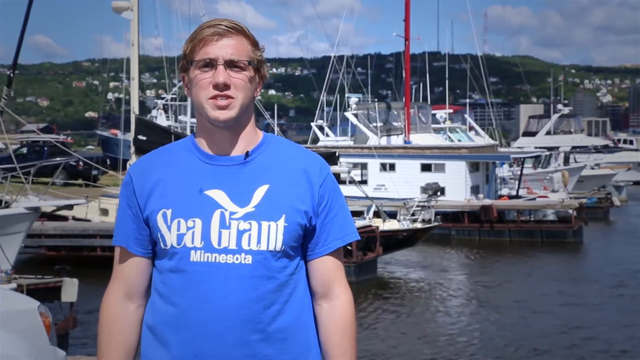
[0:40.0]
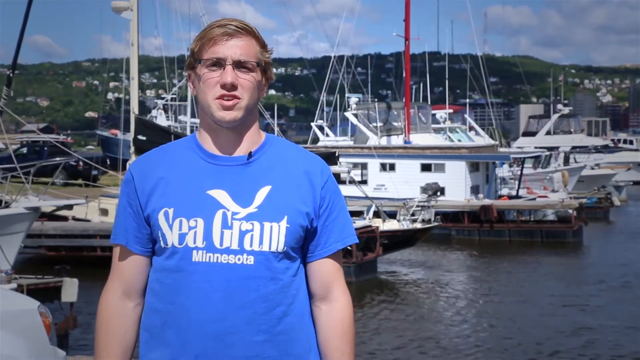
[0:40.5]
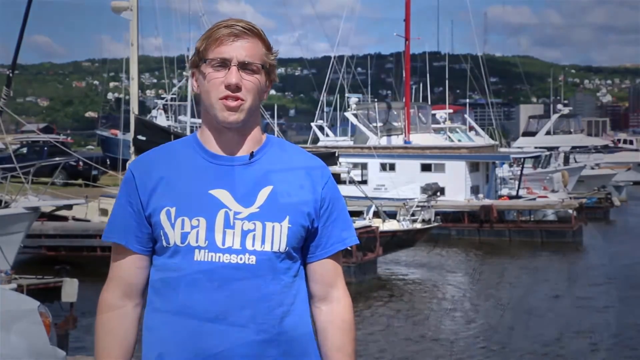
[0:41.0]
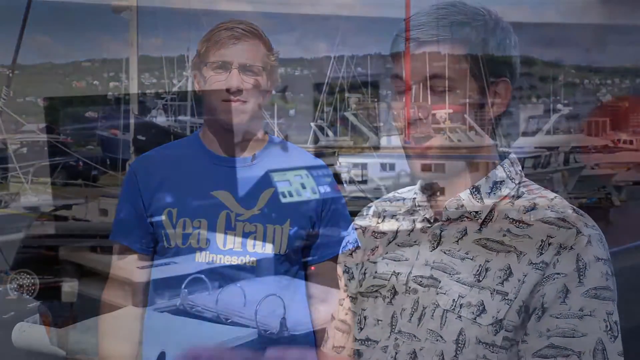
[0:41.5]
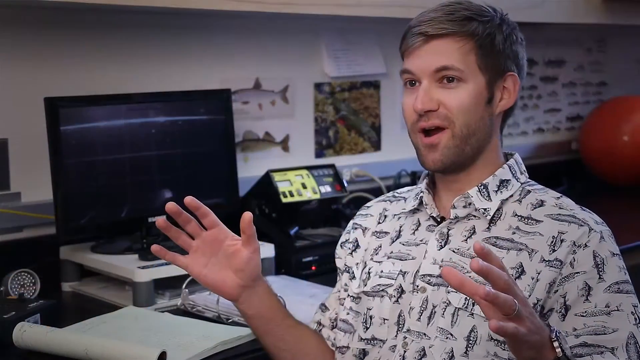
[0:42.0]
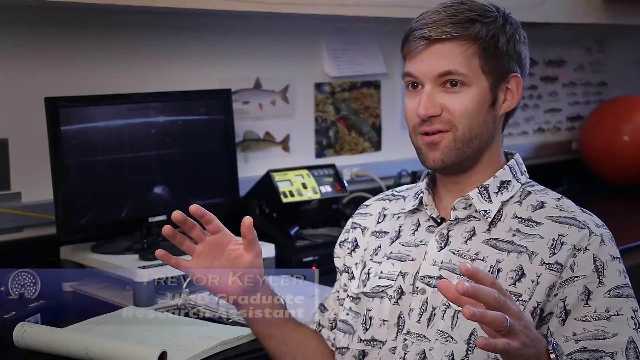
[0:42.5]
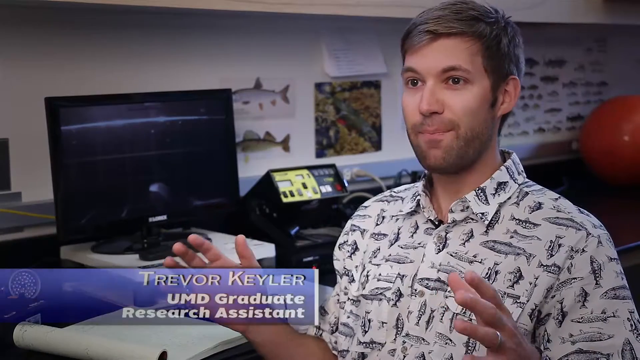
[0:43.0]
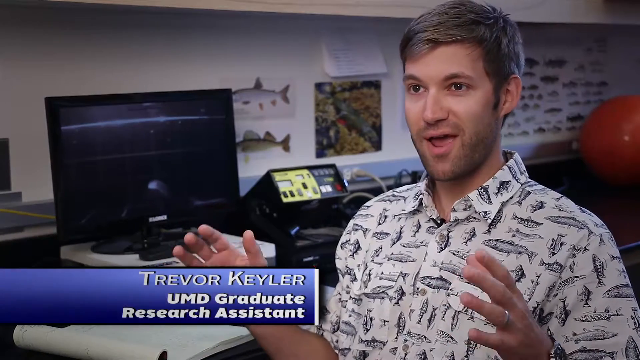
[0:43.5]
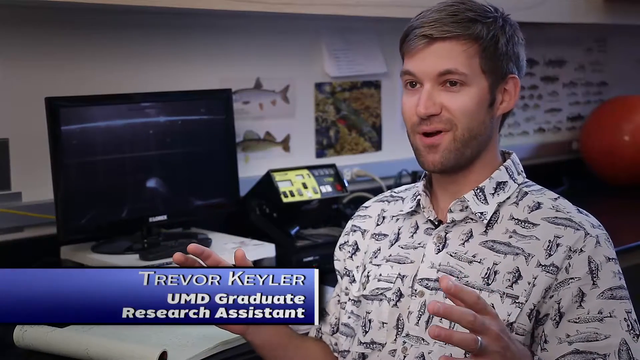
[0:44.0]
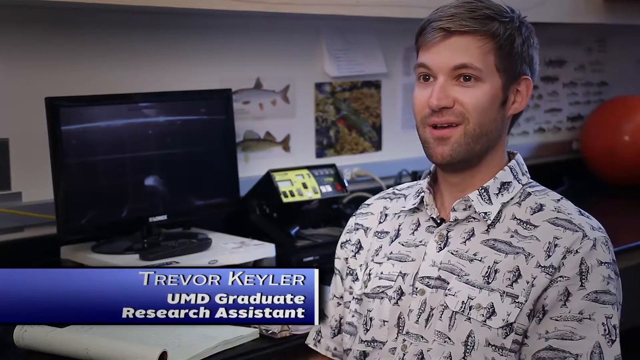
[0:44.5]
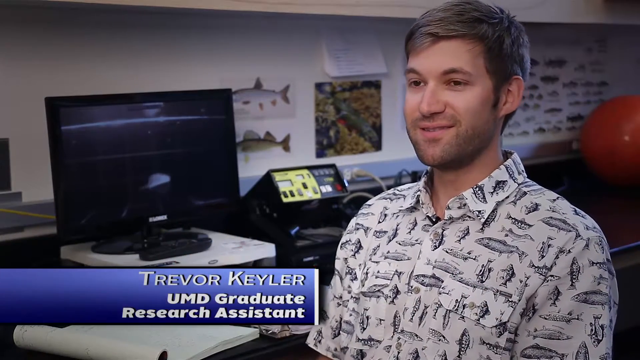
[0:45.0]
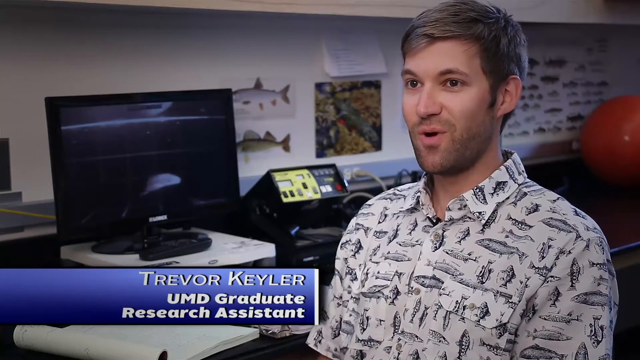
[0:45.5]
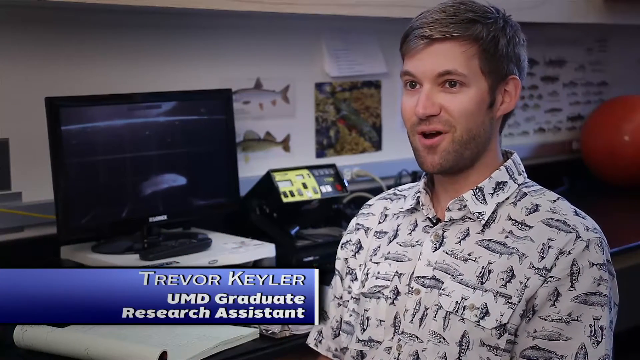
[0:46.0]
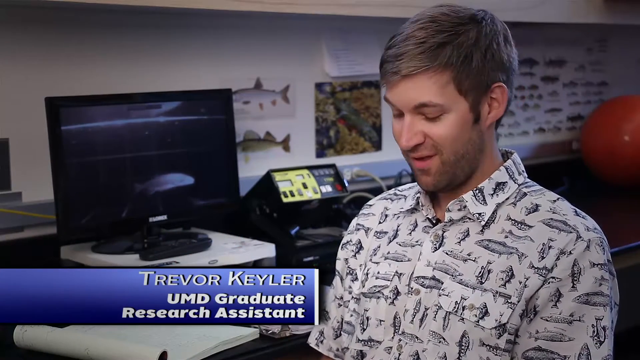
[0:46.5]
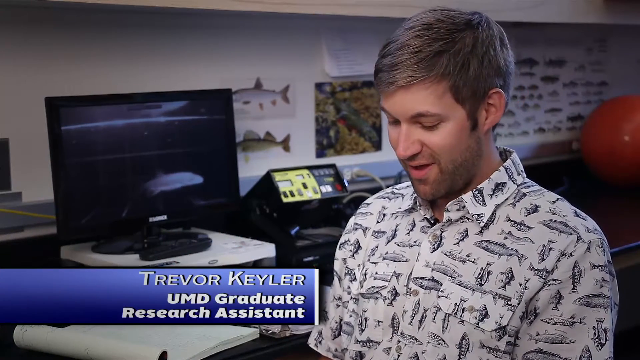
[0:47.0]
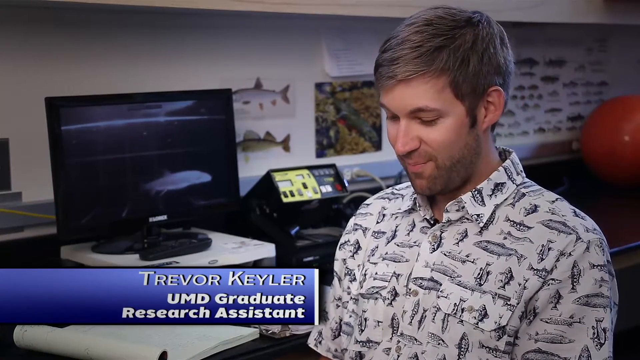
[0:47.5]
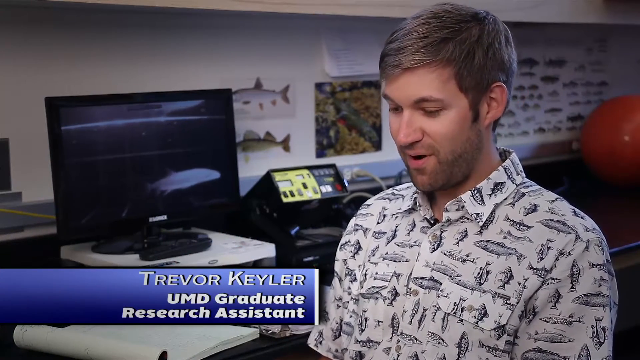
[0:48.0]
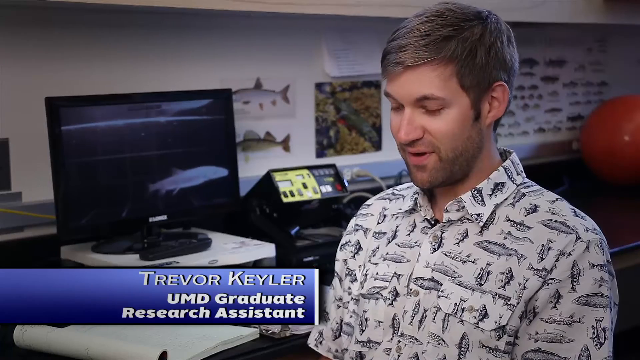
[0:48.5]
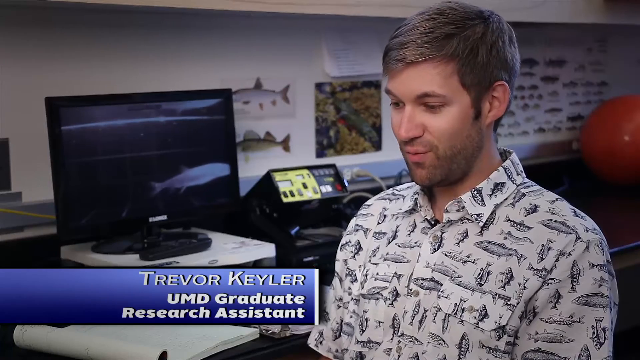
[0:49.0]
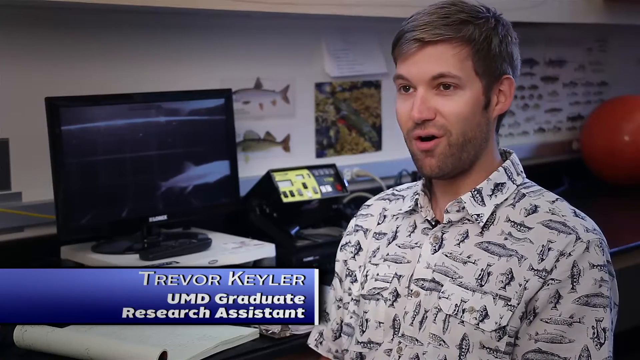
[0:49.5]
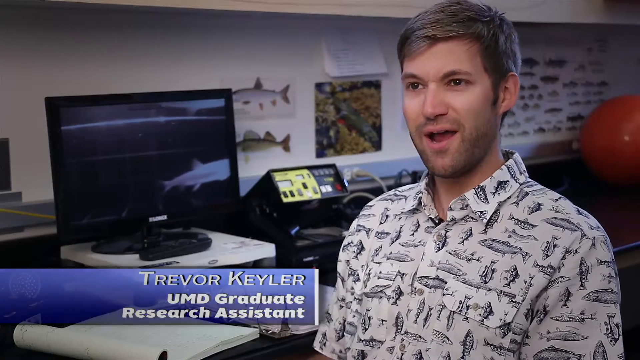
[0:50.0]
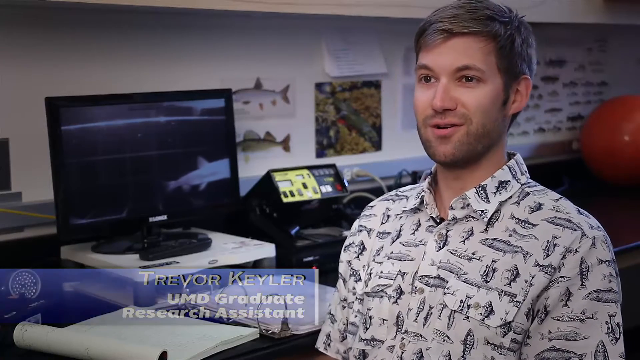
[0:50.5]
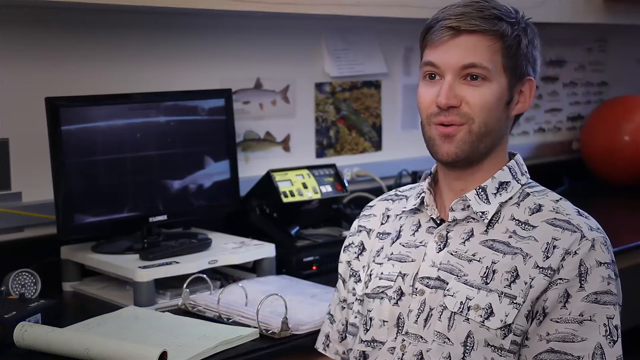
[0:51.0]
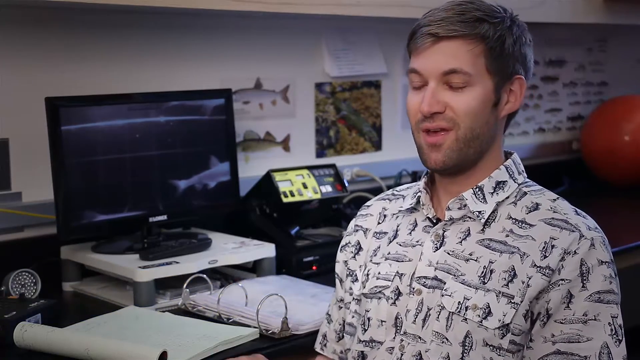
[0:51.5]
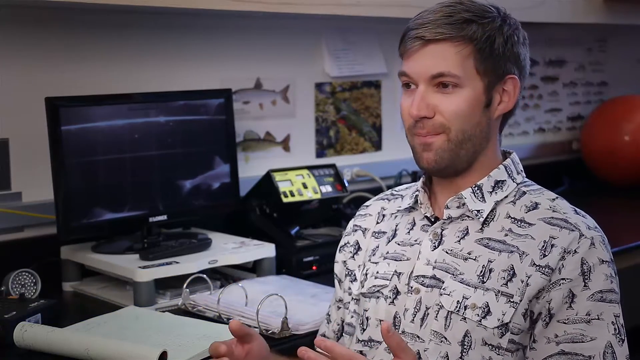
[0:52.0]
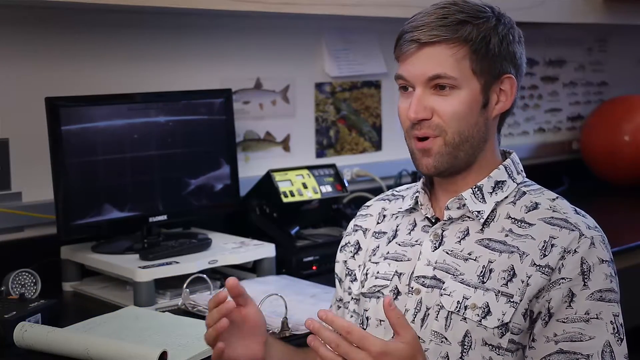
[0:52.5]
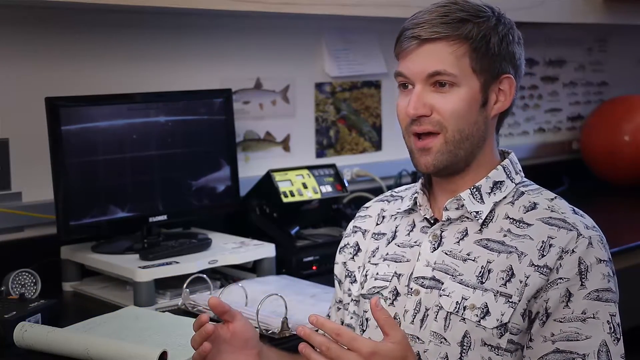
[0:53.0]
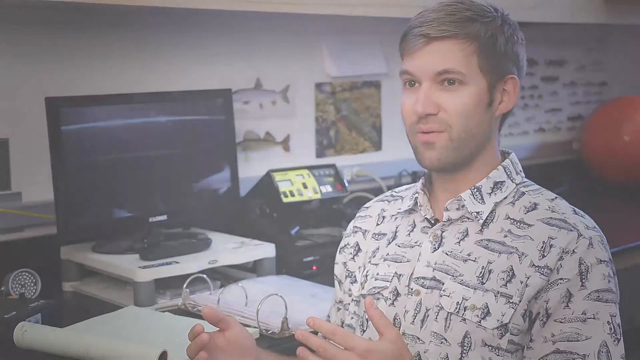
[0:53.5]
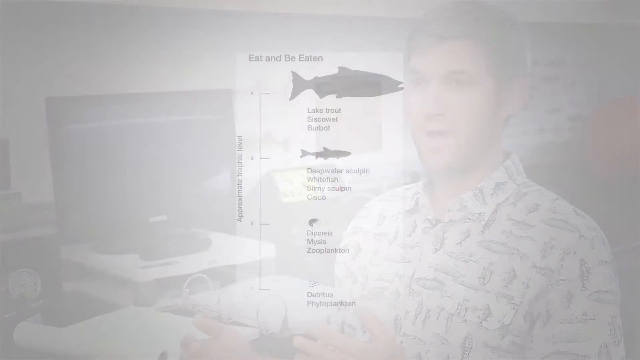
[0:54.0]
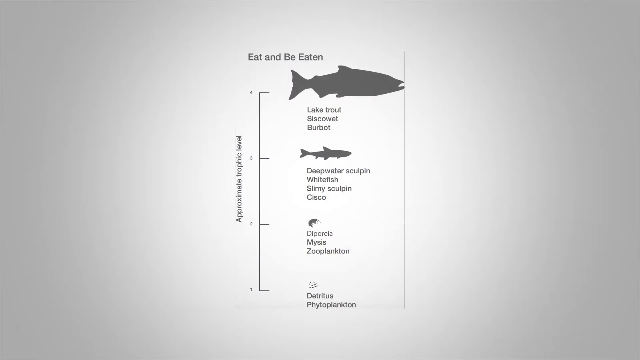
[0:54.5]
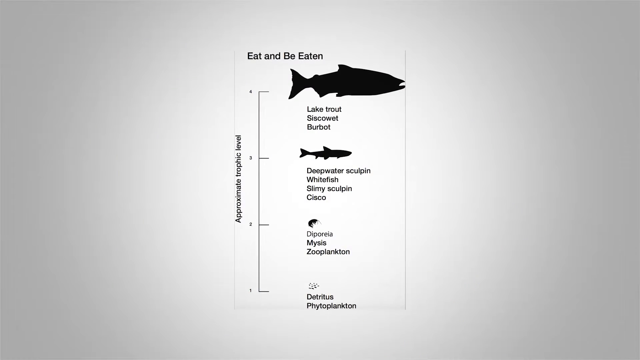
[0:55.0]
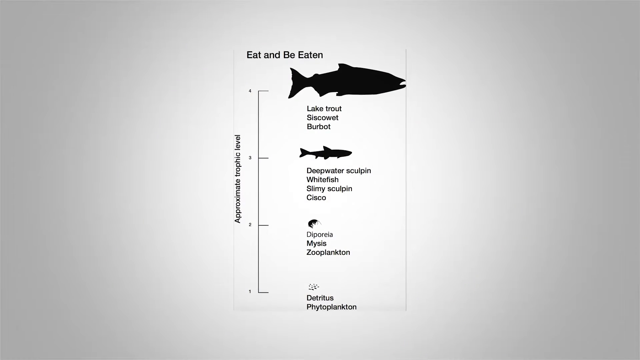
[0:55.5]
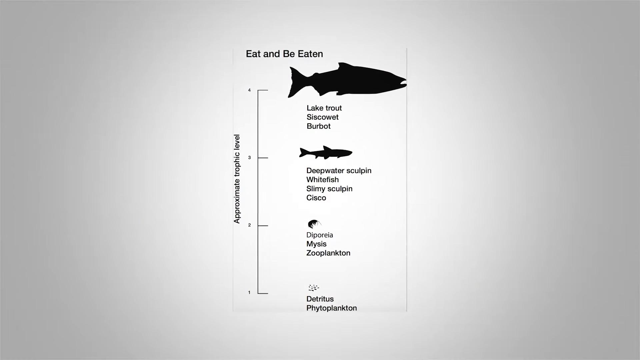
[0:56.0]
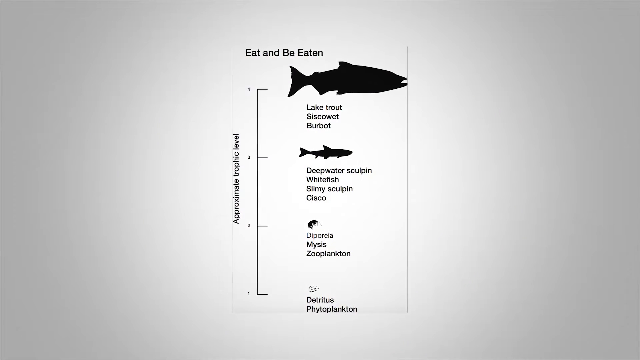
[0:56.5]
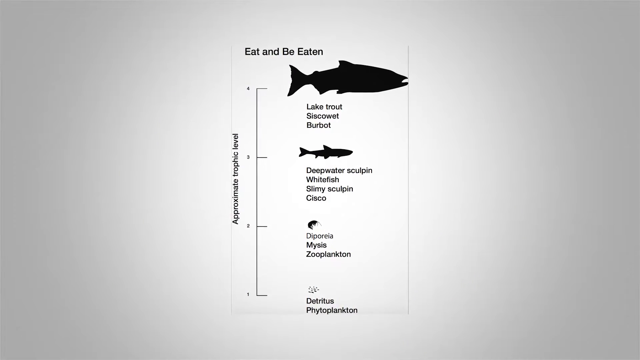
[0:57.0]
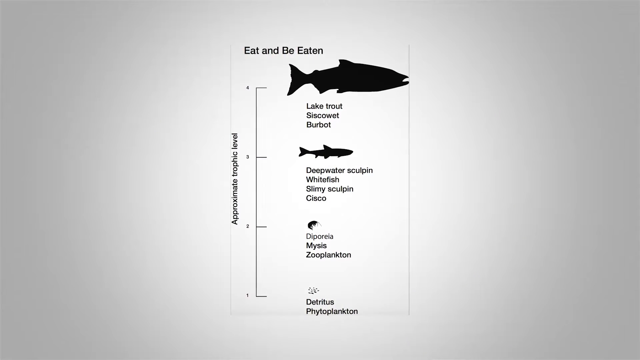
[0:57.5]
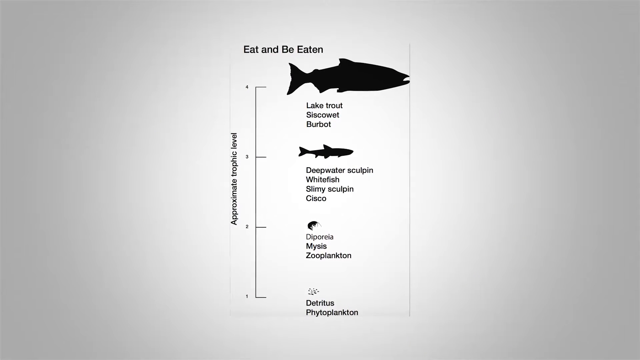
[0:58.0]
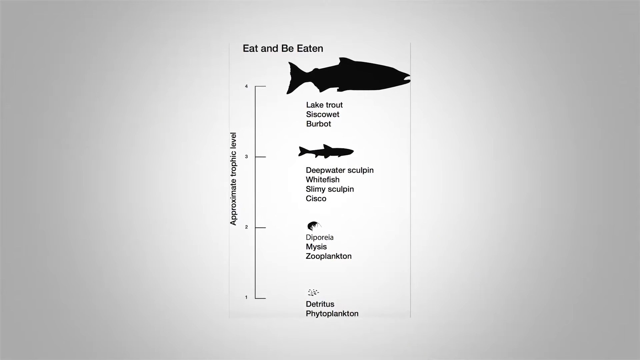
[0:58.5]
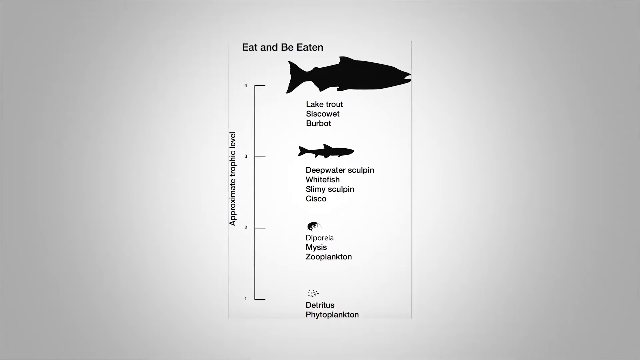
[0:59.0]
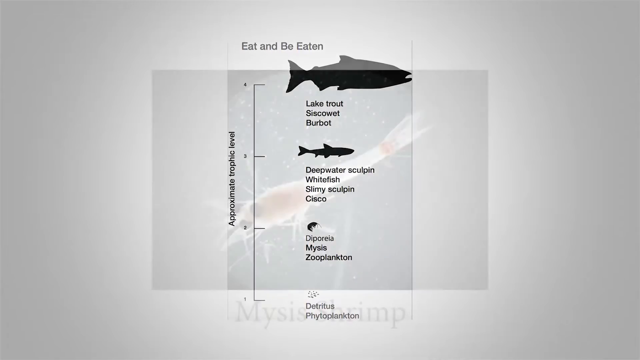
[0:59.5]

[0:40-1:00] A man in a blue shirt that says "Sea Grant, Minnesota," with blonde hair and glasses, stands in front of a bay area with boats. The video then cuts to a man in an office wearing a white shirt with fish on it. He is identified as Trevor Kaler, a UMD graduate and research assistant. His office has a computer with a space-themed background, multiple diagrams of fish on the wall, and a large red ball on the wooden desk. He has short dirty blonde hair and a trimmed beard, seems pretty excited as he talks, and appears to be going through different fish.